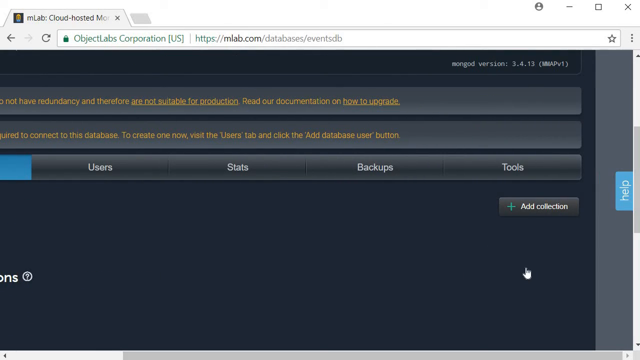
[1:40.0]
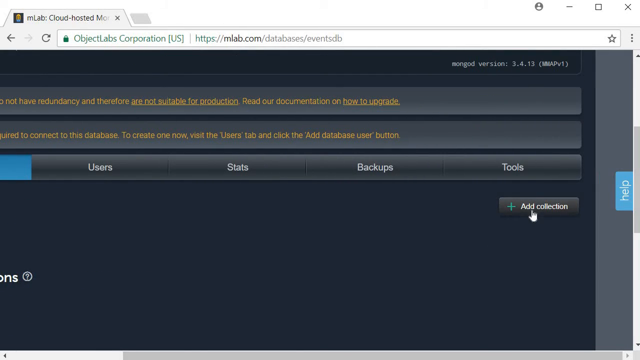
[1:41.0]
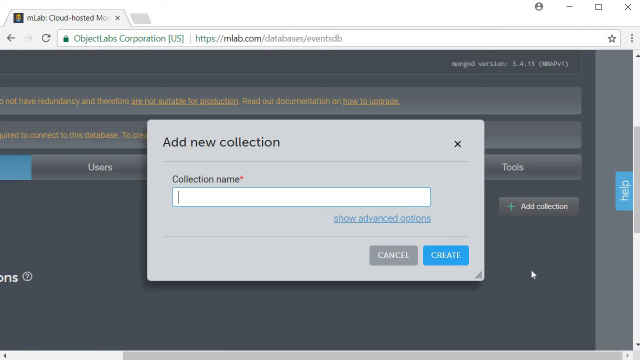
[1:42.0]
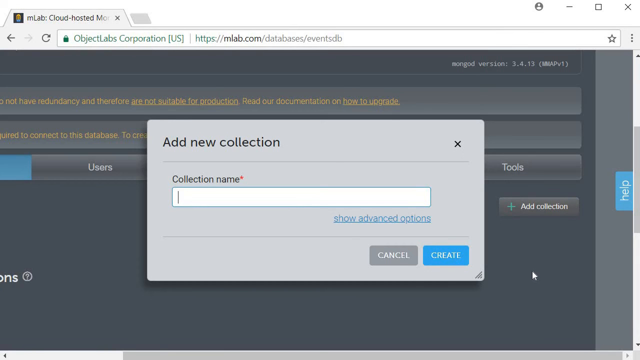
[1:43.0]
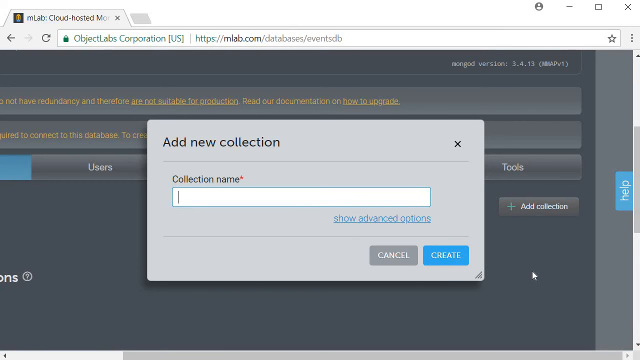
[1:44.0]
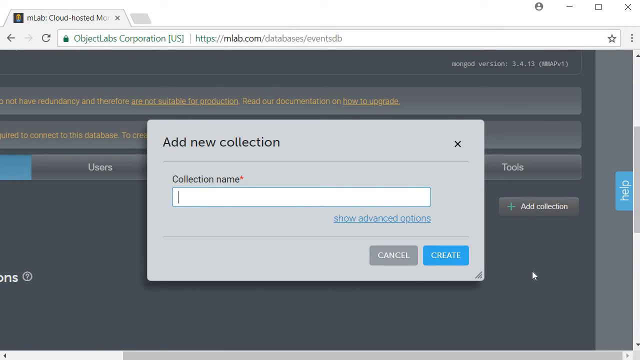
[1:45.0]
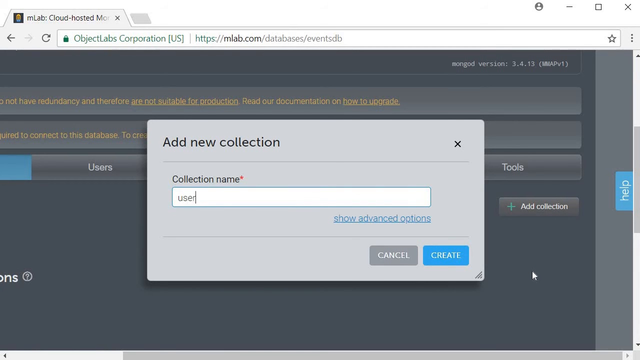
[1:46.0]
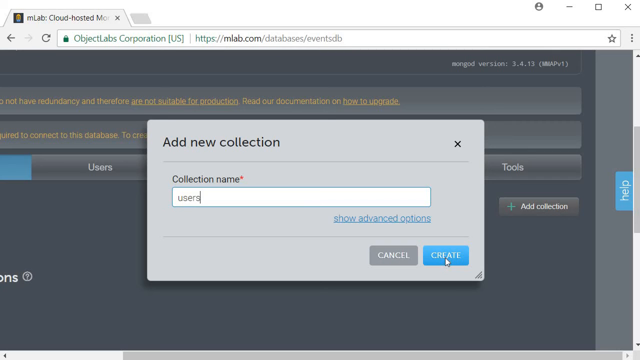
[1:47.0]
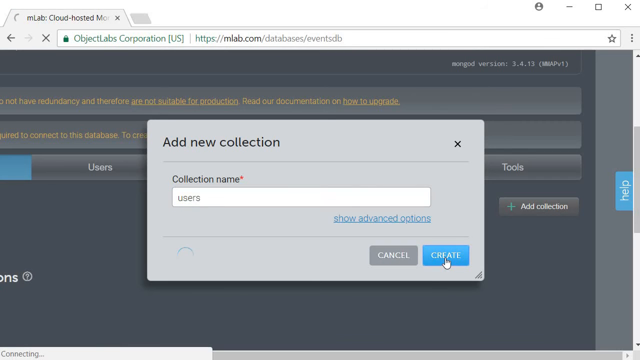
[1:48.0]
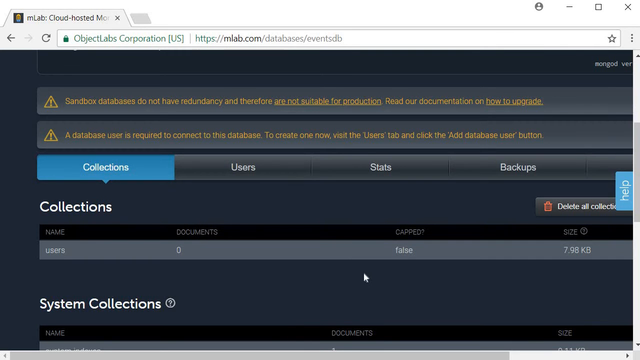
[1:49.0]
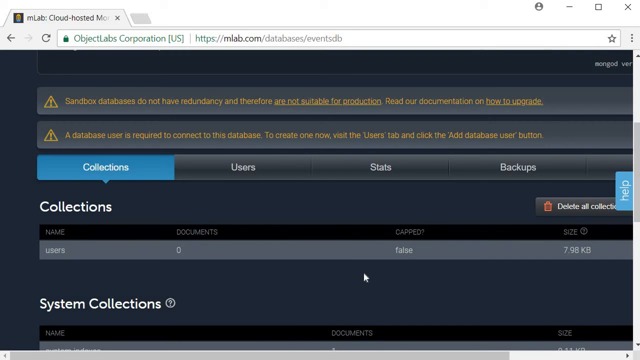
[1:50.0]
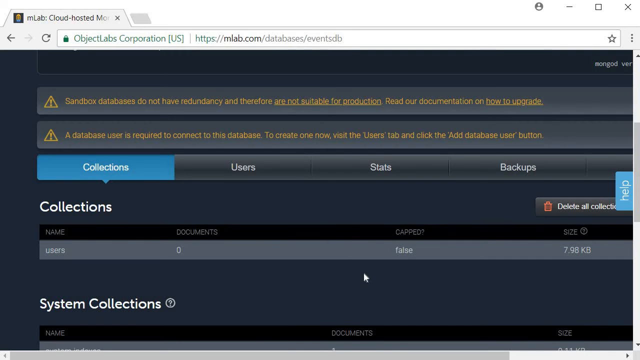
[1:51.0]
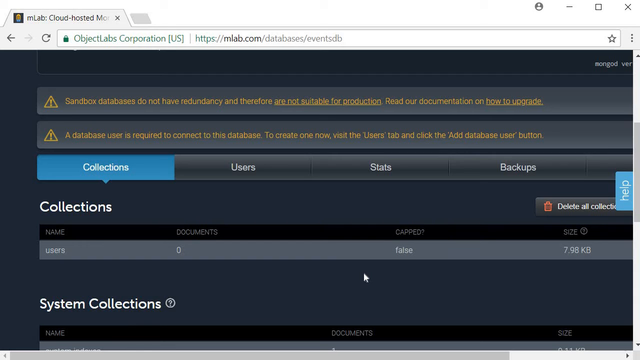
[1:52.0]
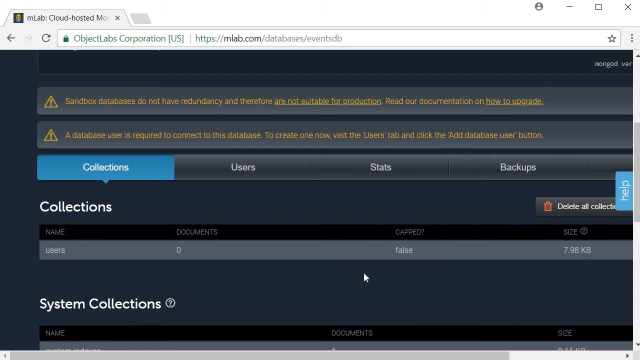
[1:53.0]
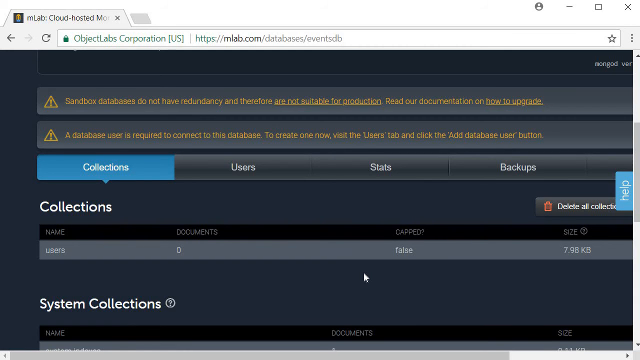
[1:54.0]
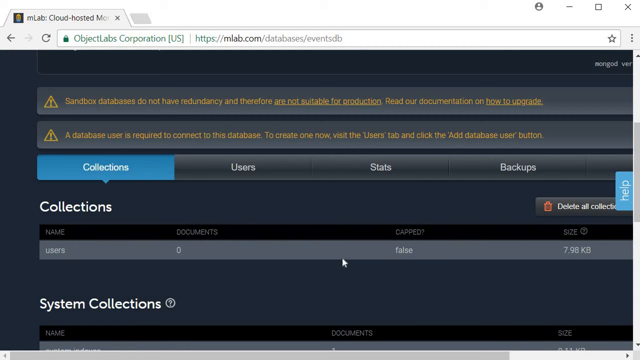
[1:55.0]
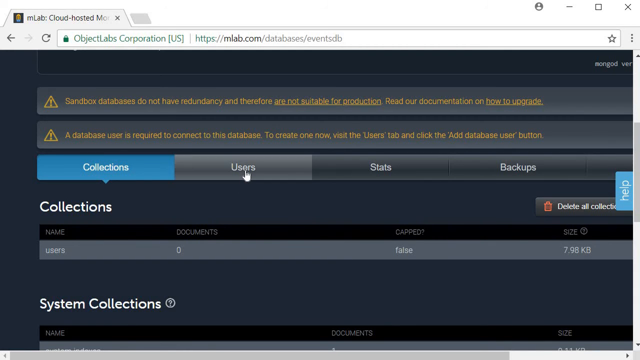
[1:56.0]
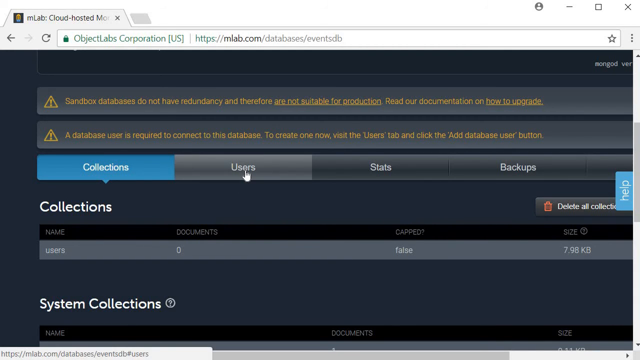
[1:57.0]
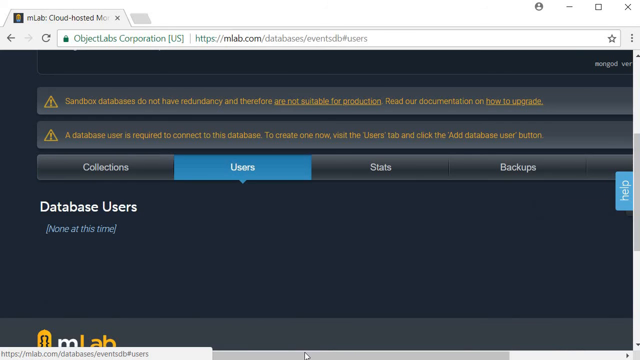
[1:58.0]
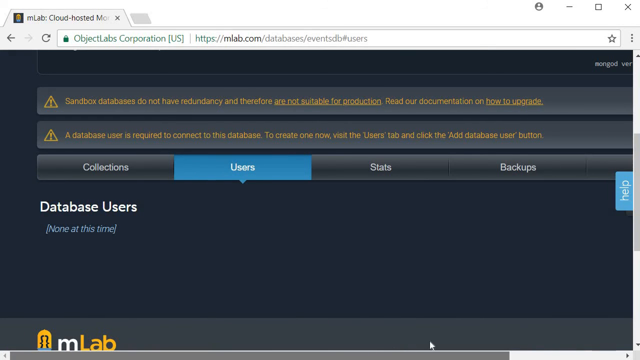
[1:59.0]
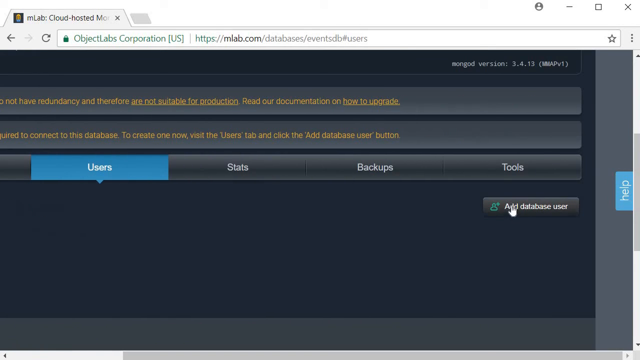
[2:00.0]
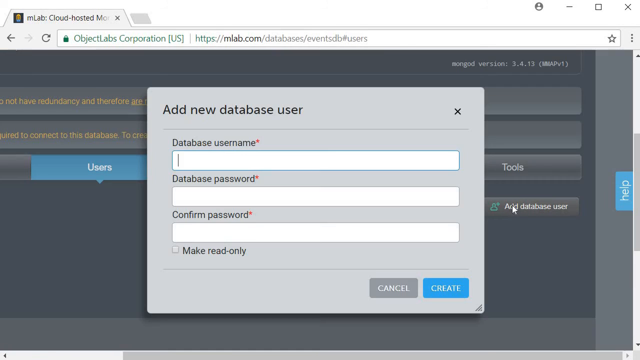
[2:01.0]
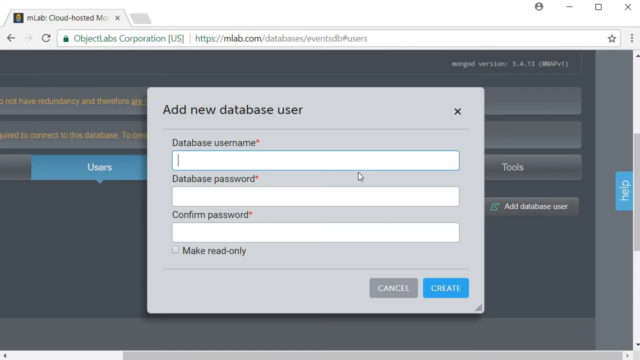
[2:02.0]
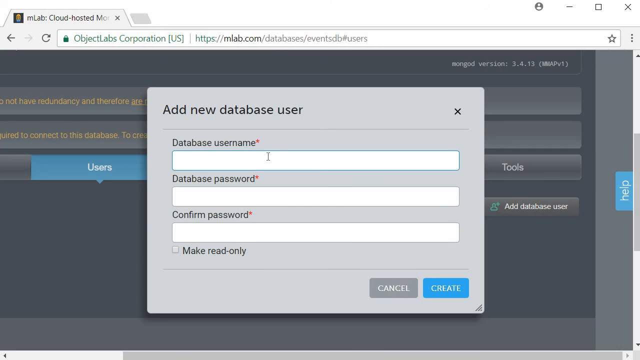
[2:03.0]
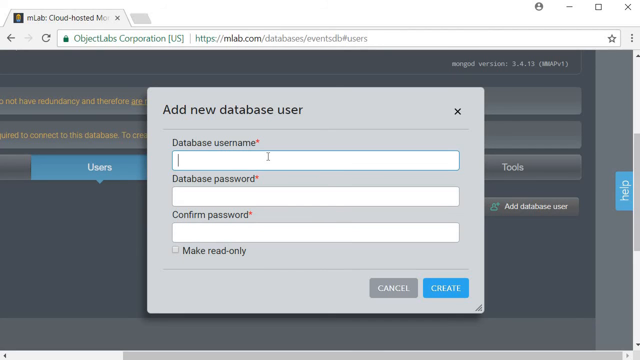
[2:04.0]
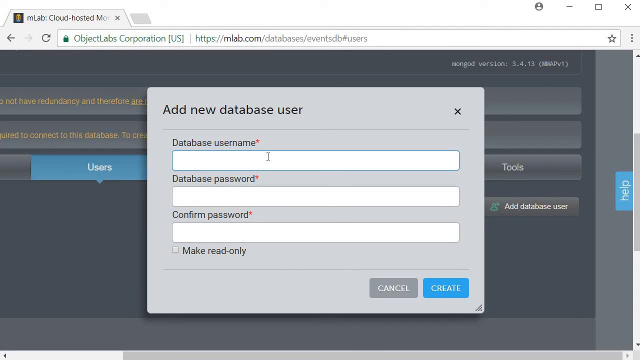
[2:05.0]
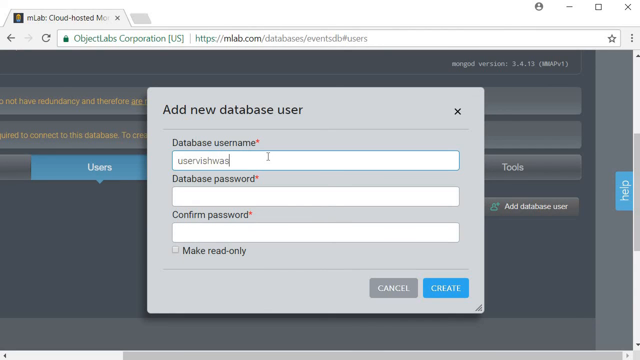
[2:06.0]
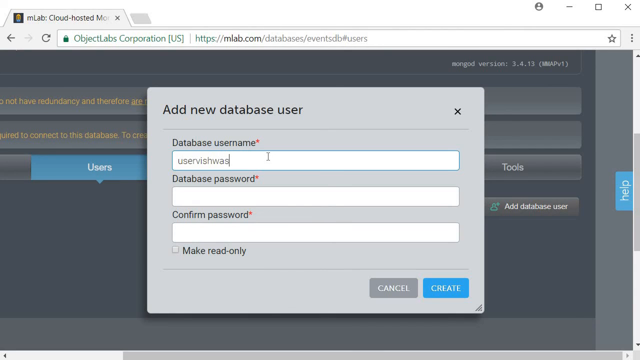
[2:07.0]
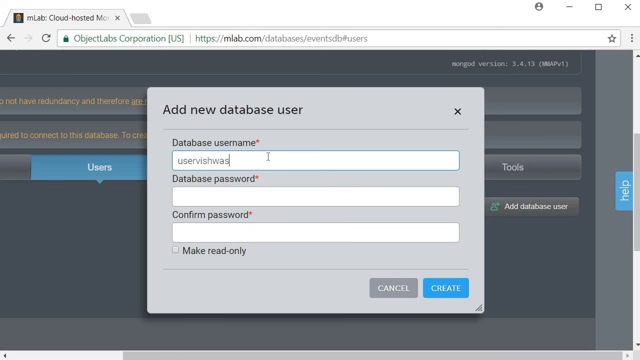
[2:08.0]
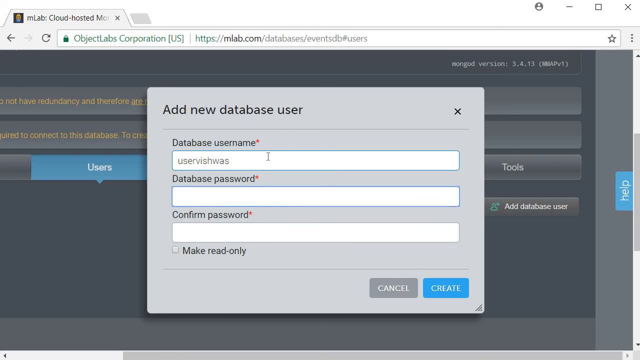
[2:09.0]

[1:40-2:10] An account user page on the website MLab.com is shown, and the URL indicates the database being edited is named EventsDB. The site background is dark blue, with gray bars stretching from left to right covering the top half of the screen. On the right is a dark gray button with a plus sign reading "Add Collection". The user clicks it, the back of the screen becomes faded, and a gray window pops up with the heading "Add New Collection" at the top. Its only field is "Collection Name", with Cancel and Create buttons beneath it. The user types "users" in the collection name field and hits the create button, which returns to the previous screen. In the middle of the screen is a row of gray tabs, the first being "Collections", highlighted in blue with an arrow pointing downward to white text reading "collections" and a black and gray chart beneath it. Next to the Collections tab is a tab named "Users". The user clicks it; it becomes highlighted in blue and shows that there are no database users at this time. The user then scrolls to the right and clicks a button reading "Add Database User". A gray window pops up in the middle of the screen with the heading "Add New Database User" and three blank white fields with black labels above them: Database Username, Database Password and Confirm Password.